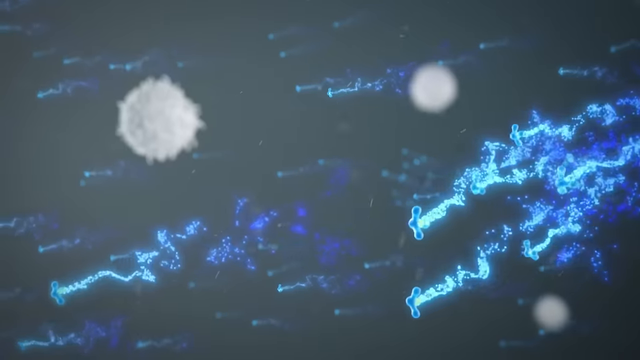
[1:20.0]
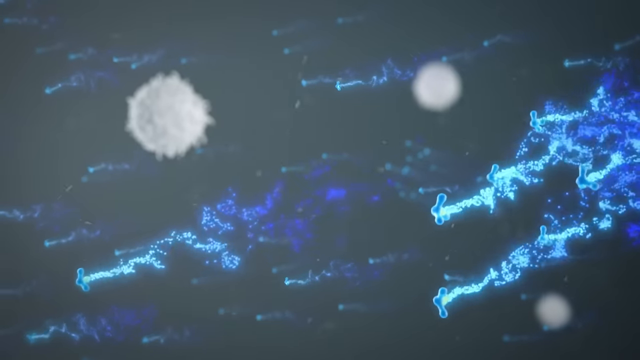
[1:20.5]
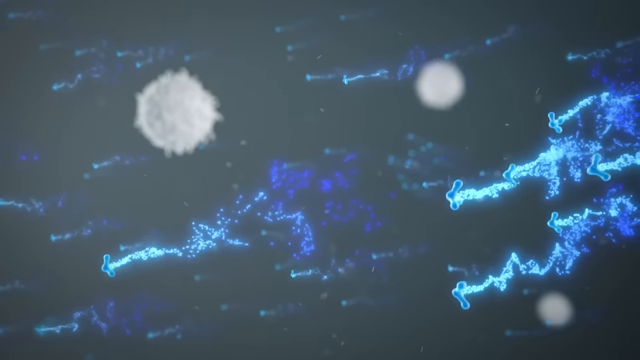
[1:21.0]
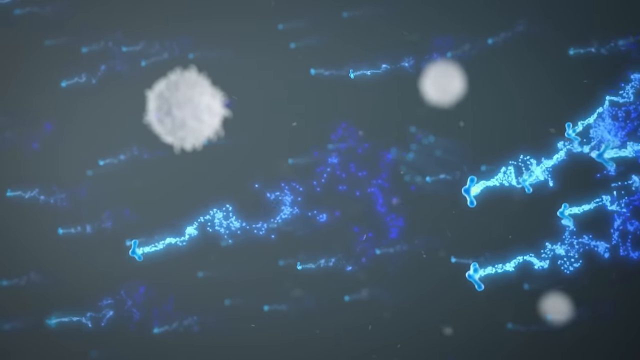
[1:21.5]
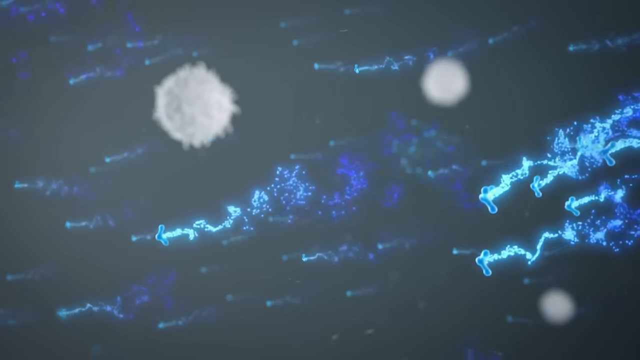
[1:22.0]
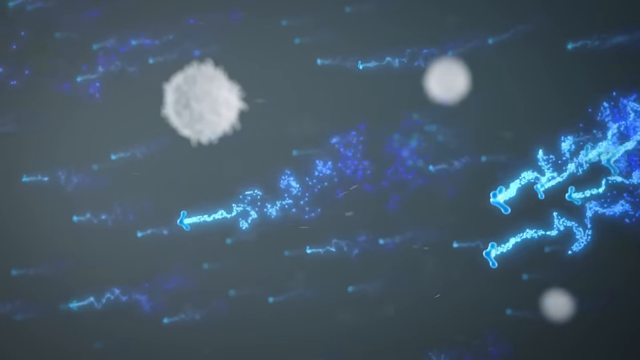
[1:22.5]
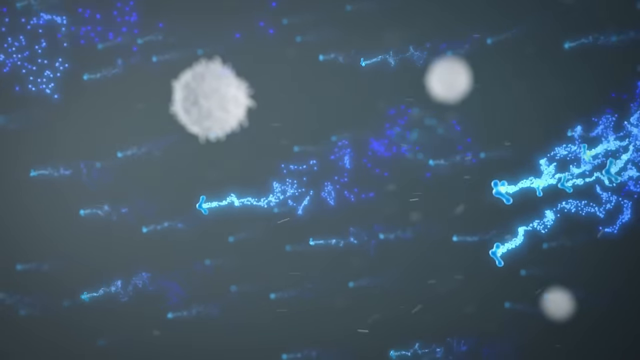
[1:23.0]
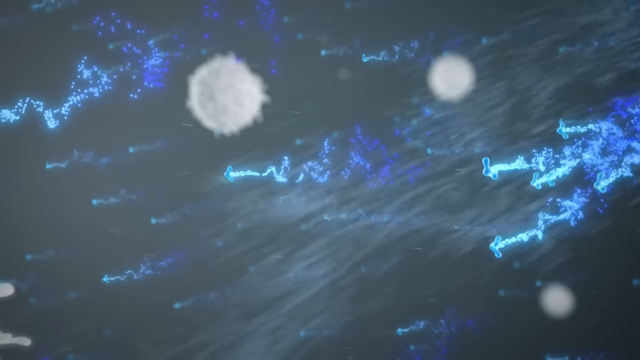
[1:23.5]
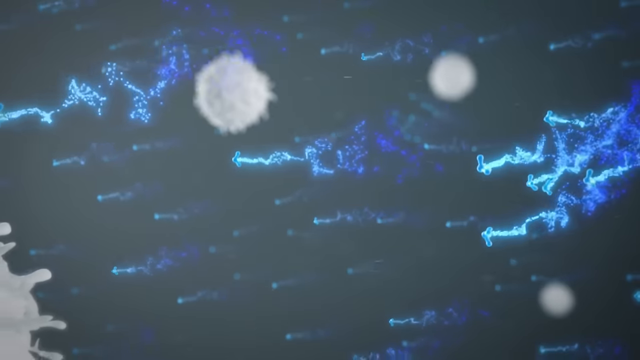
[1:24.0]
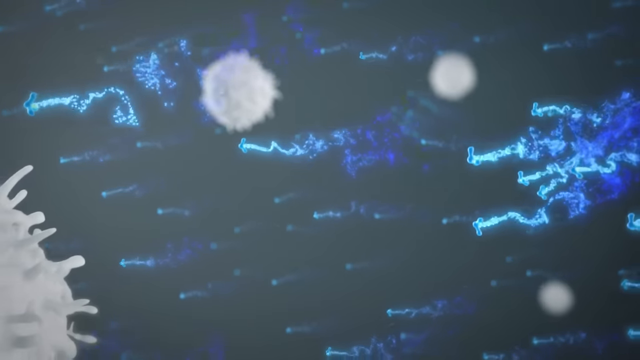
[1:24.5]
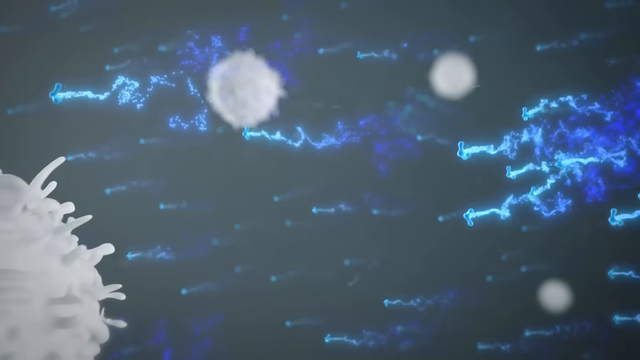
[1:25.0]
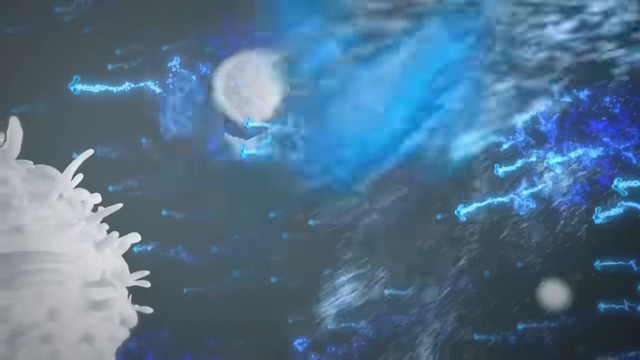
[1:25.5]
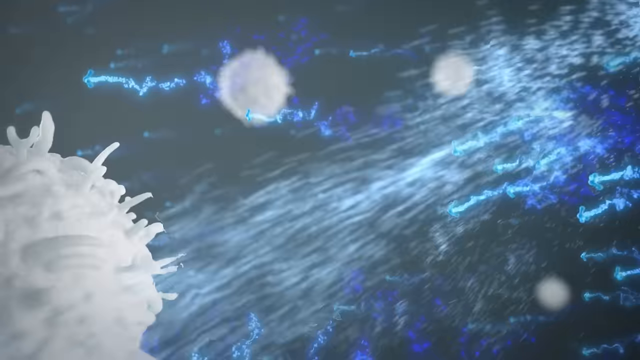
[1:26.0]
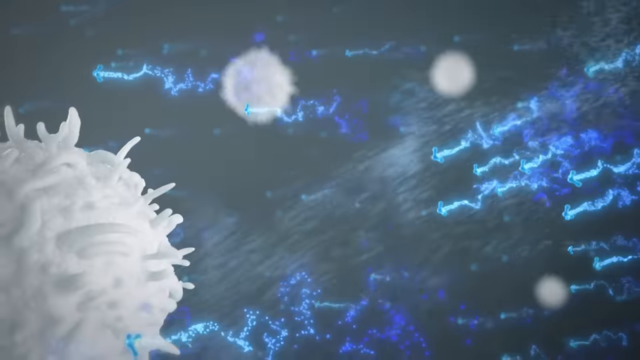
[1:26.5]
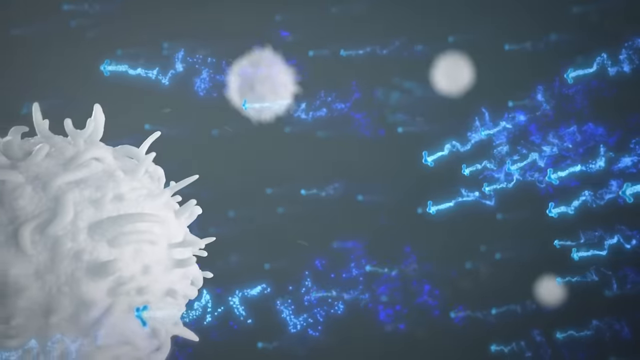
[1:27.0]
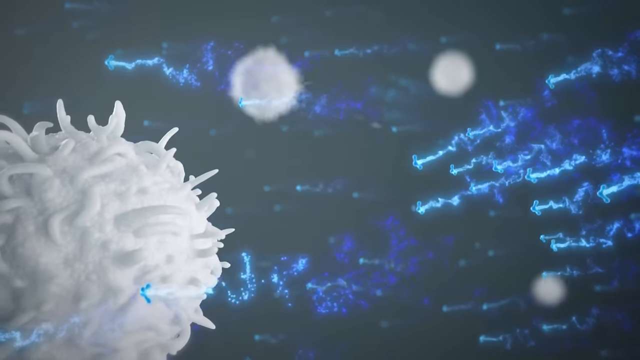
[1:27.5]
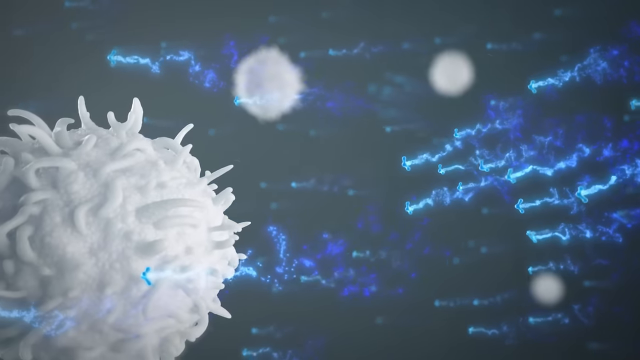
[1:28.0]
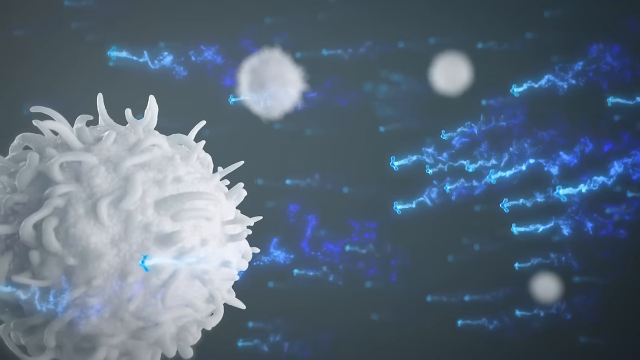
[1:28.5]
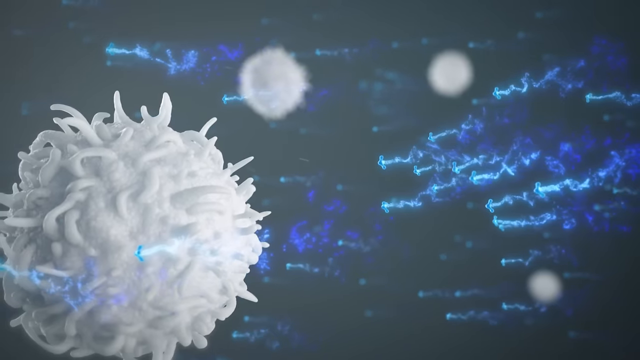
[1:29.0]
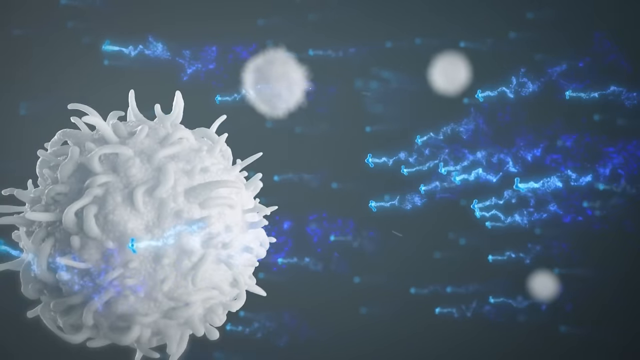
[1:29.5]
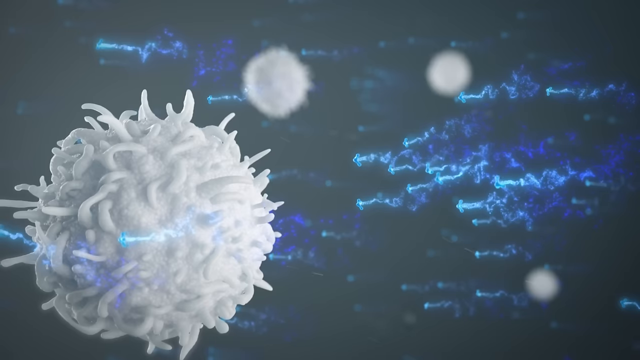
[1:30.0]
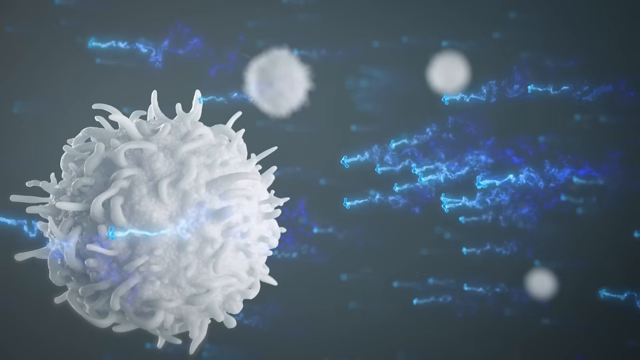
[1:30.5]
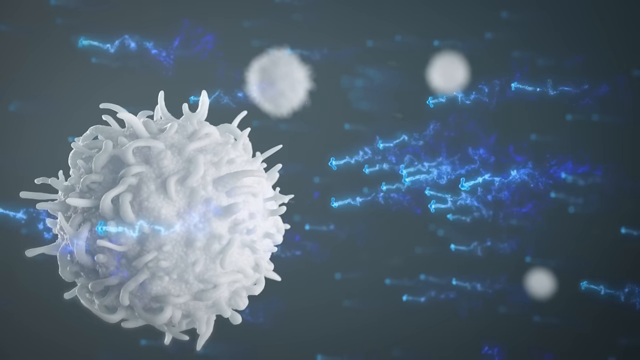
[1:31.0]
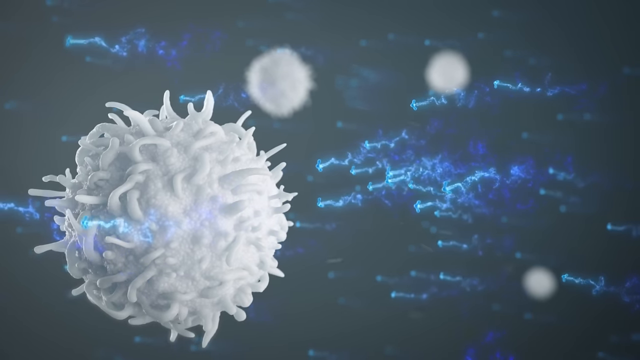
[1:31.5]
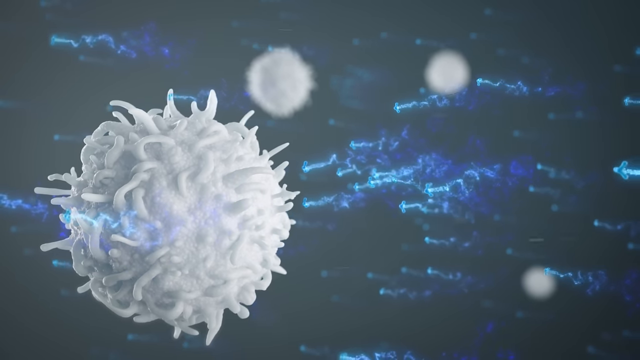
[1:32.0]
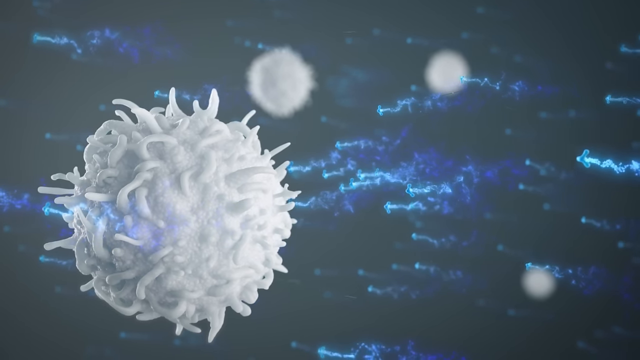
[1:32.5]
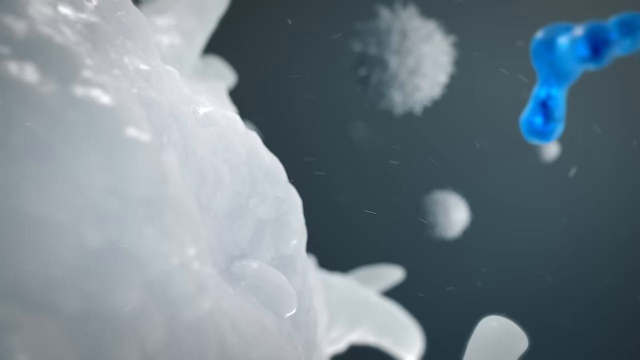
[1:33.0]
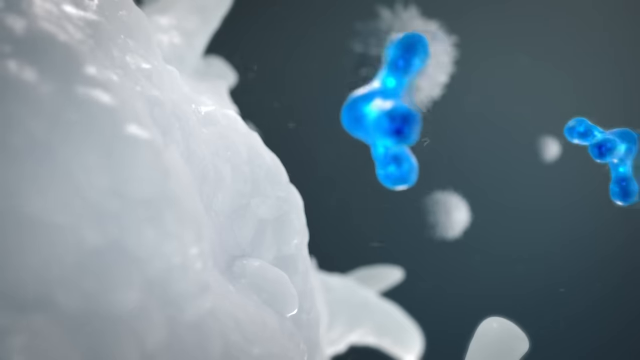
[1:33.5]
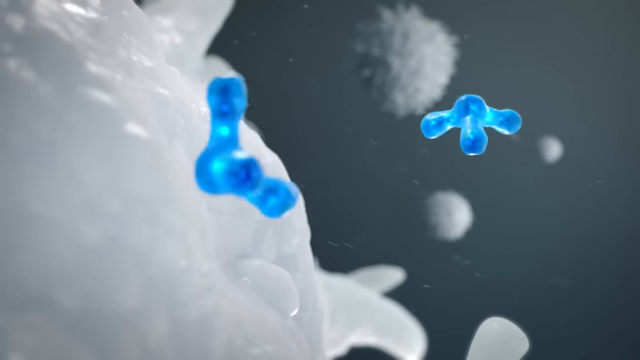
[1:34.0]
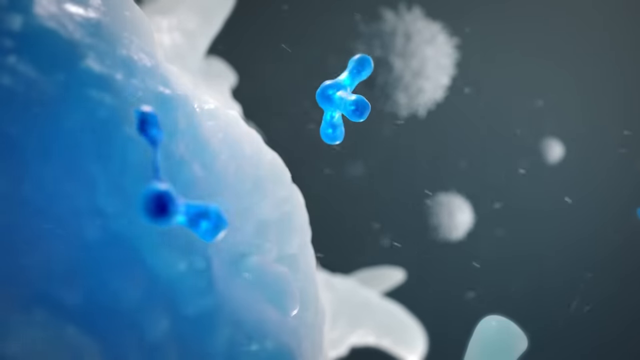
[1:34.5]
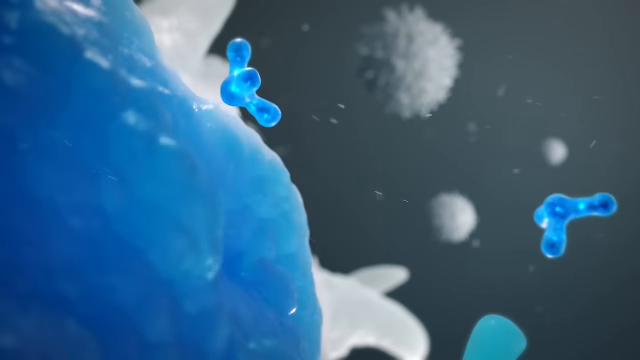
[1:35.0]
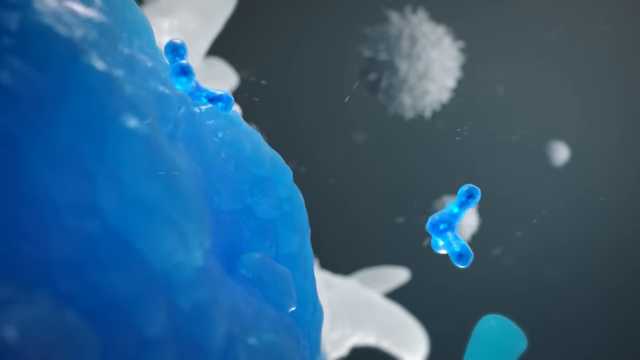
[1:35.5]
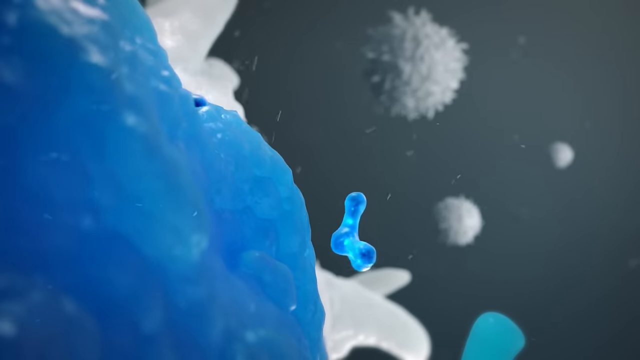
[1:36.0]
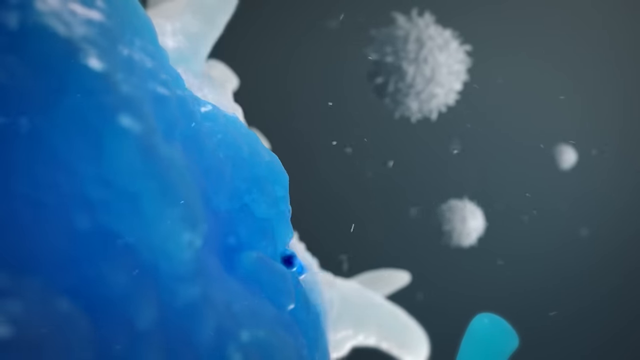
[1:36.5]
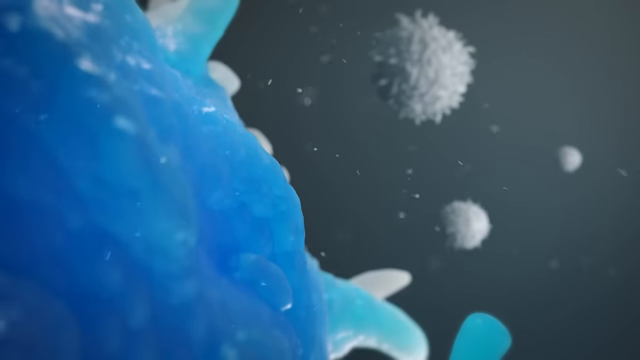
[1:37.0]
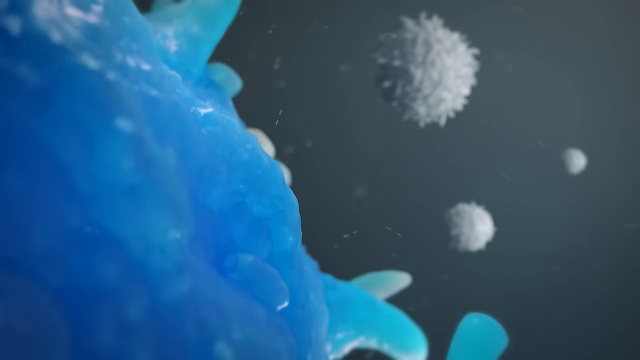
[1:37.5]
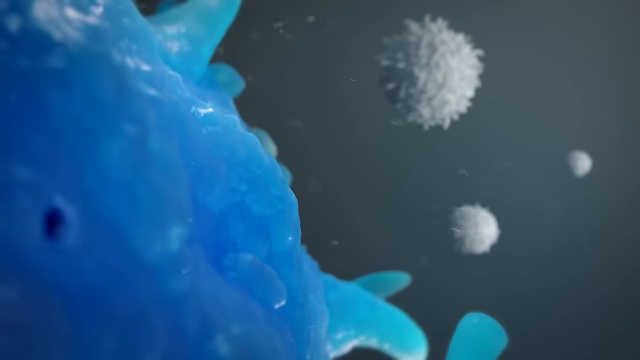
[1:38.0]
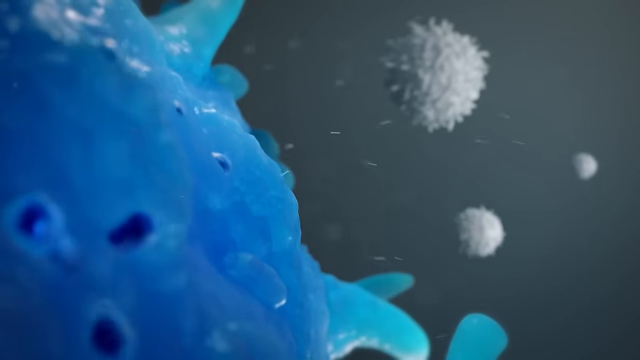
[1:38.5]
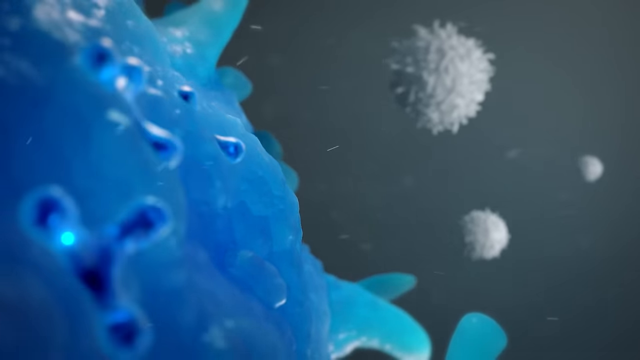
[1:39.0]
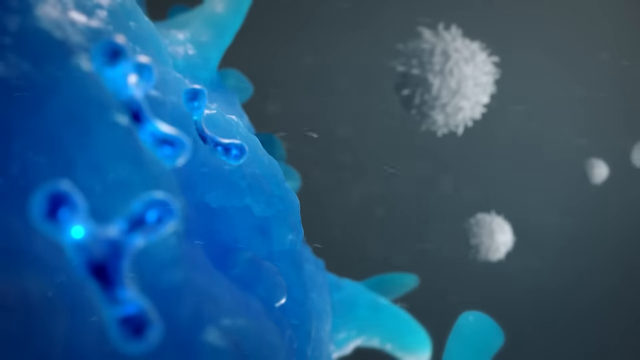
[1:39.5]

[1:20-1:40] White amorphous blobs float against a black background, and spheres hover in the distance. Later, one sphere is toward the front of the image, with a whole bunch of strands coming off it almost like tendrils or tentacles, resembling a science-class representation of a germ. A few of these are shown, most of them blurry in the background. Blue streaks of light fly throughout the scene, lighter blue at the front with darker blue trails behind them. When one of the blue streaks hits the white outer casing of the sphere, the visible portion of the sphere turns blue, and small blue nodules begin growing off it.